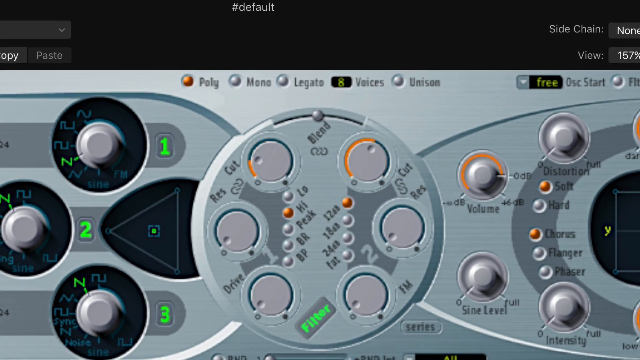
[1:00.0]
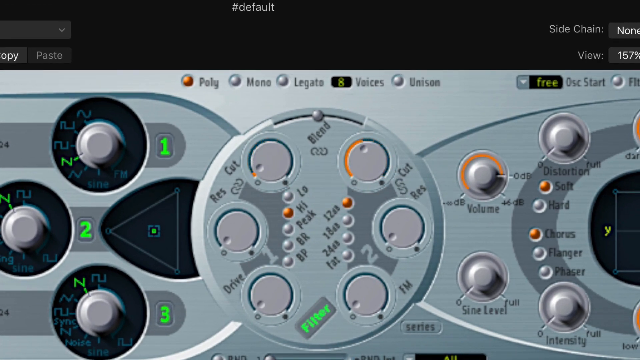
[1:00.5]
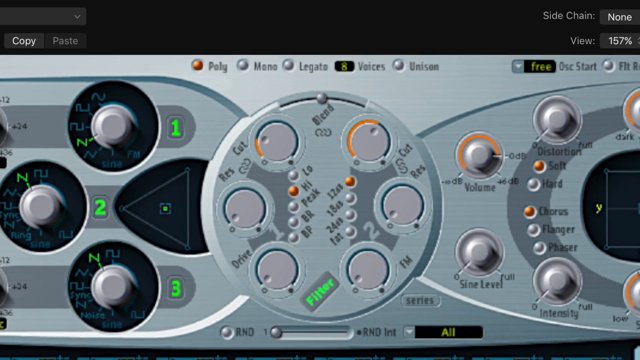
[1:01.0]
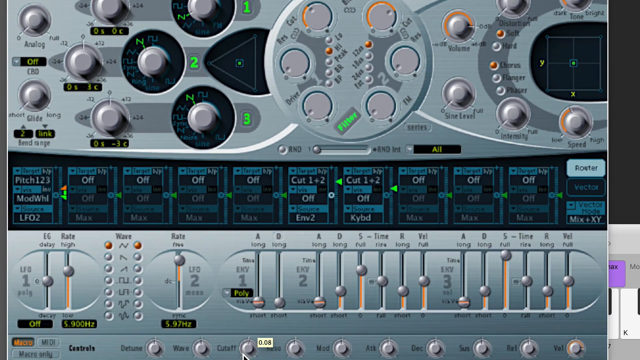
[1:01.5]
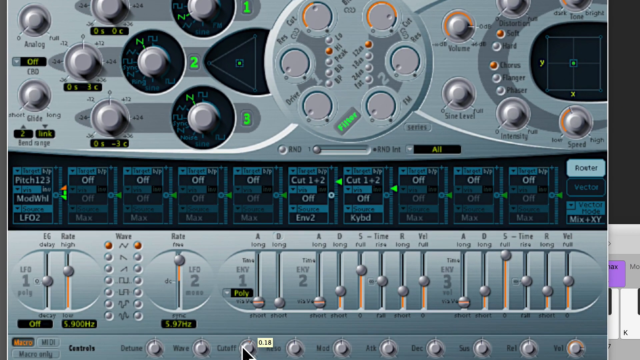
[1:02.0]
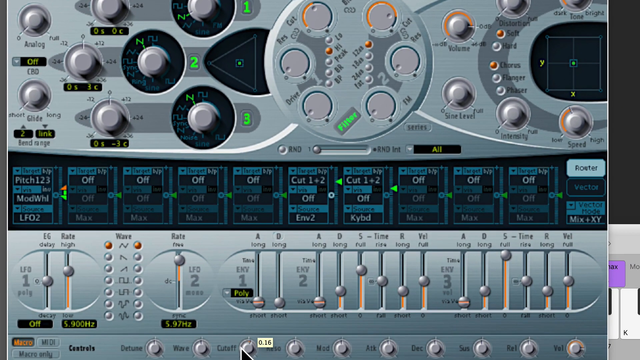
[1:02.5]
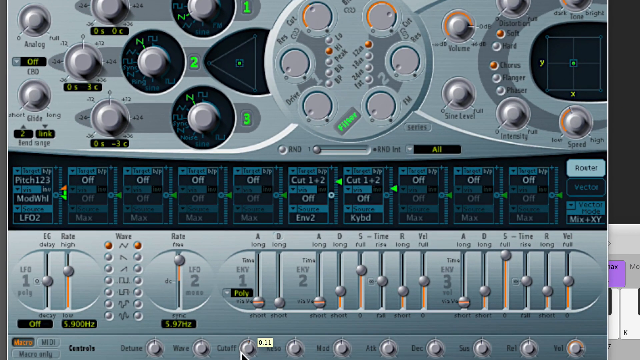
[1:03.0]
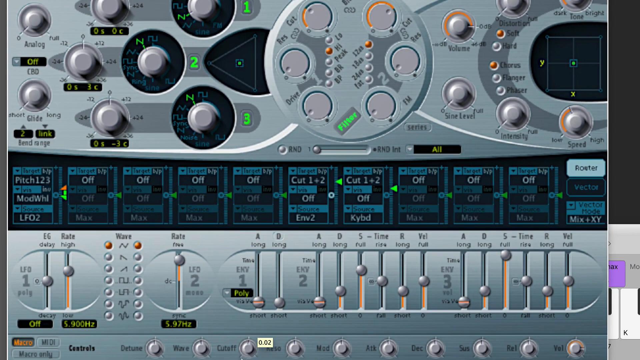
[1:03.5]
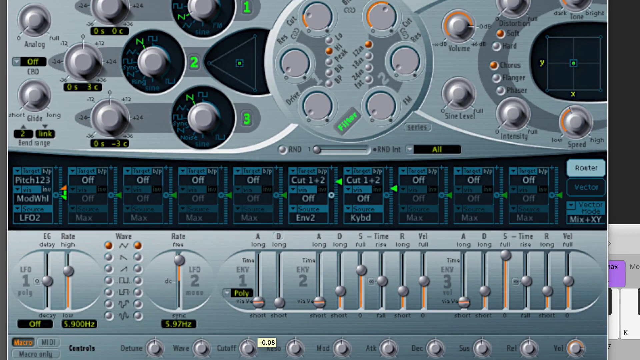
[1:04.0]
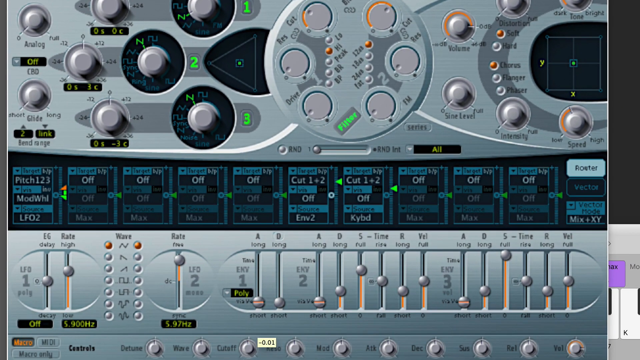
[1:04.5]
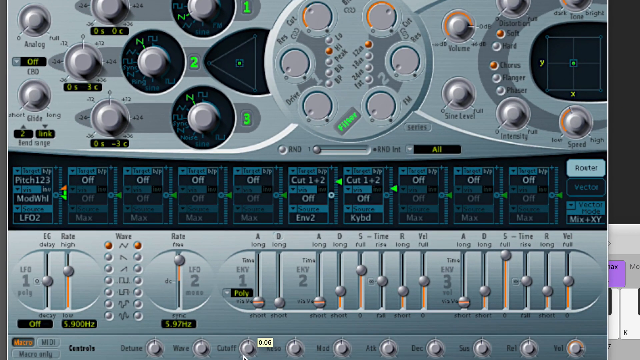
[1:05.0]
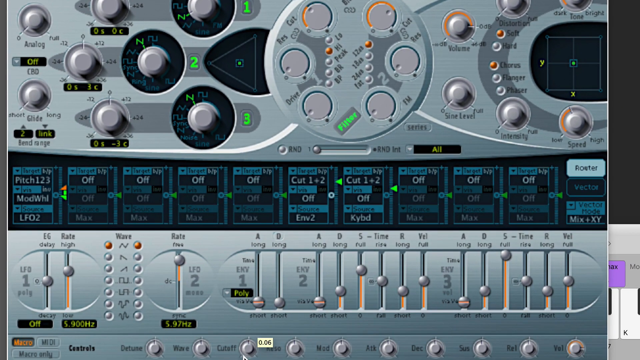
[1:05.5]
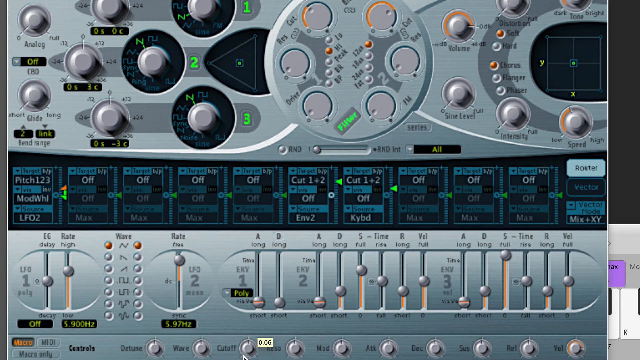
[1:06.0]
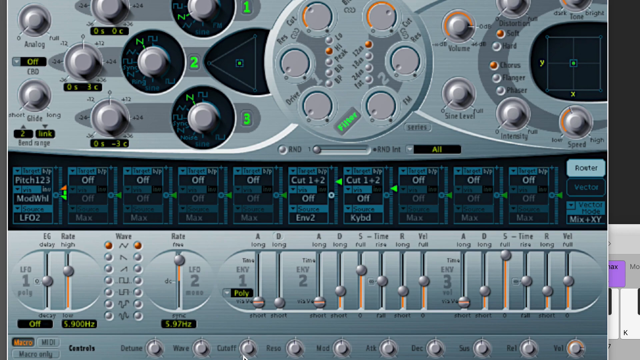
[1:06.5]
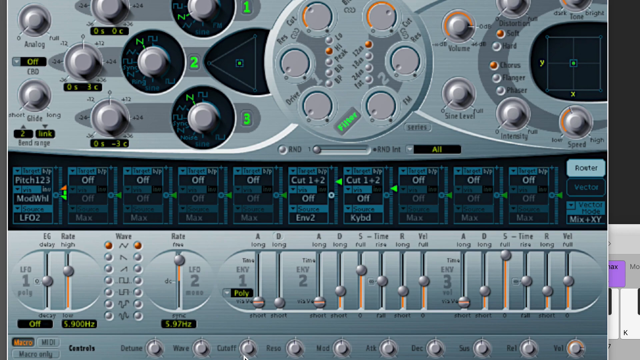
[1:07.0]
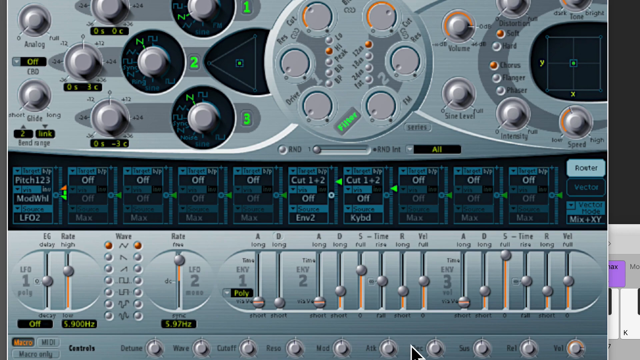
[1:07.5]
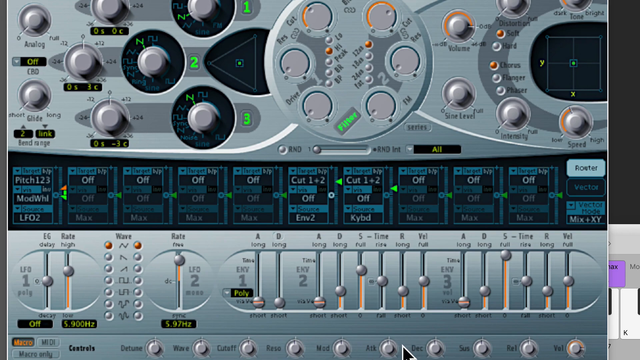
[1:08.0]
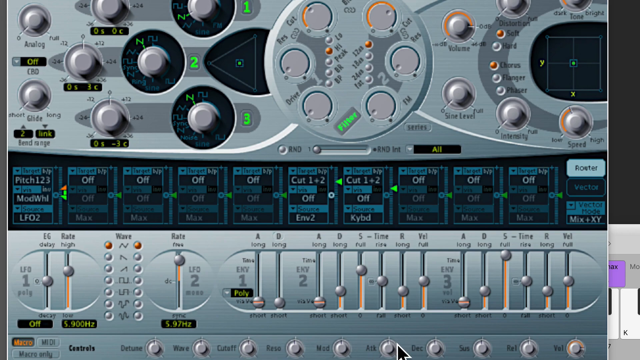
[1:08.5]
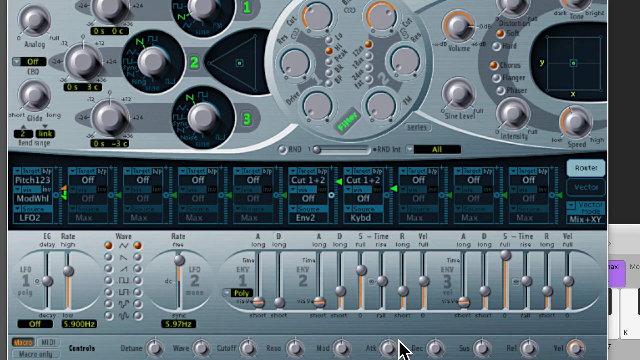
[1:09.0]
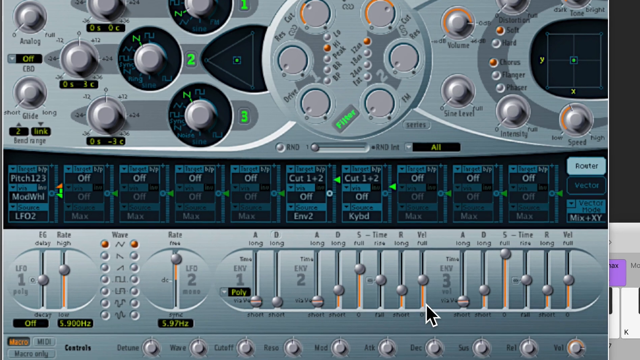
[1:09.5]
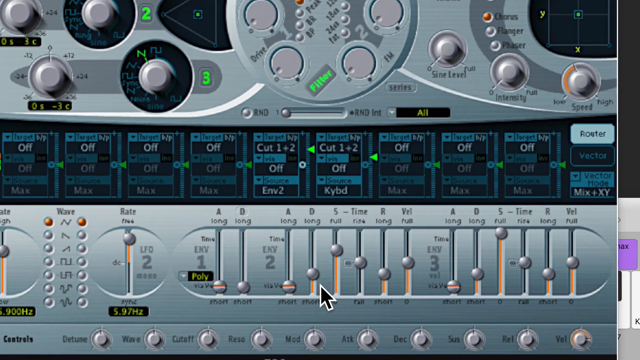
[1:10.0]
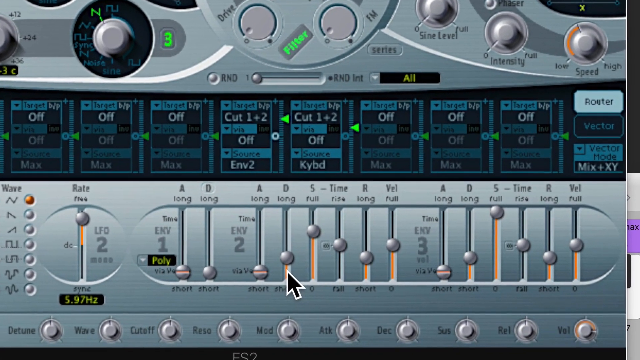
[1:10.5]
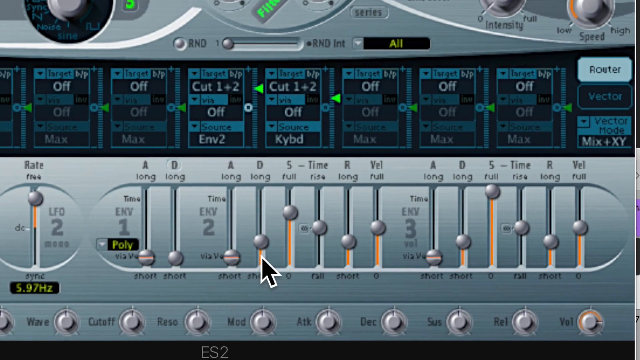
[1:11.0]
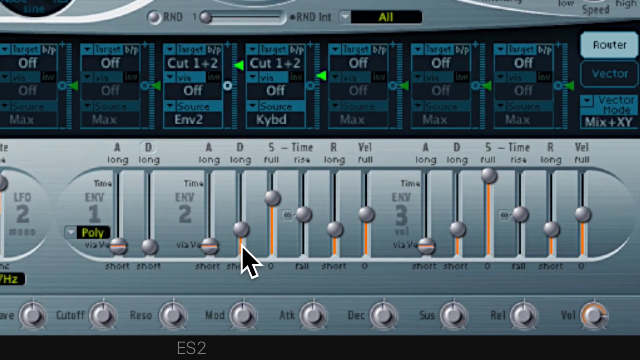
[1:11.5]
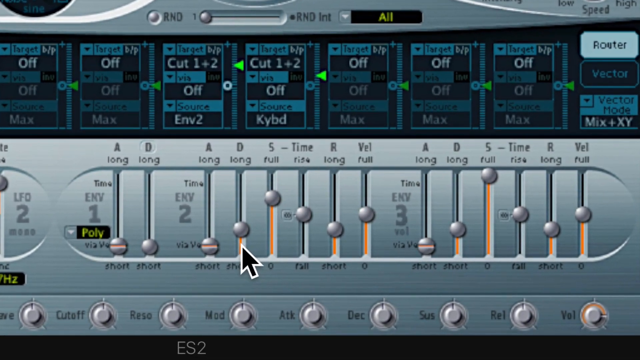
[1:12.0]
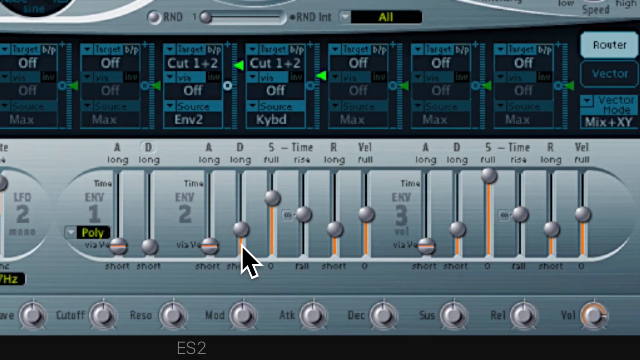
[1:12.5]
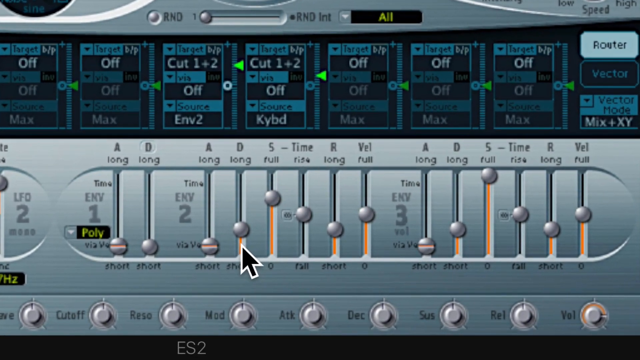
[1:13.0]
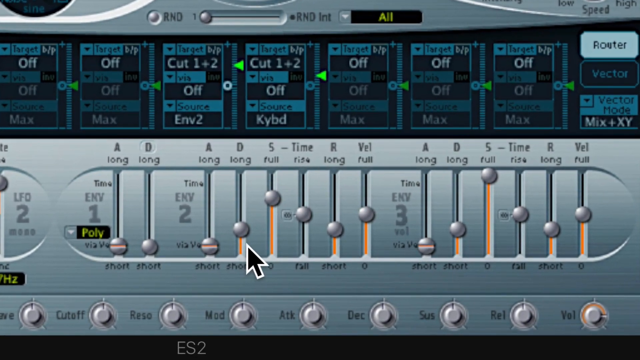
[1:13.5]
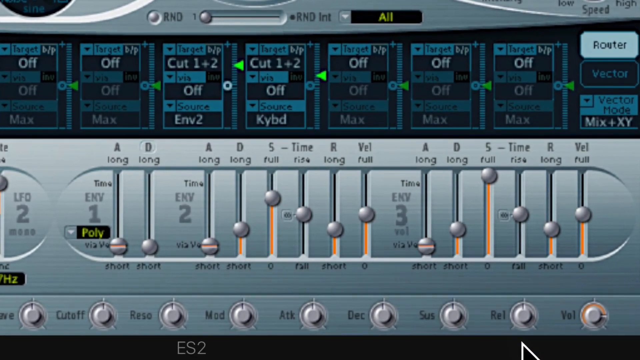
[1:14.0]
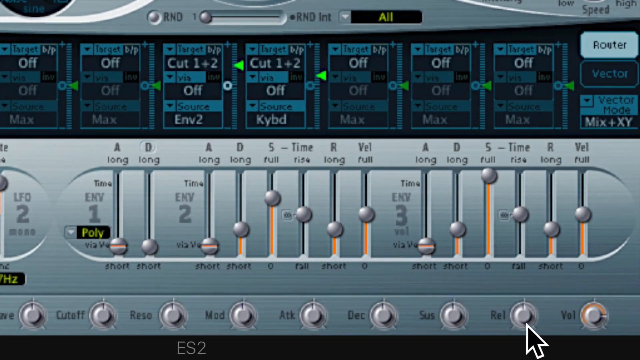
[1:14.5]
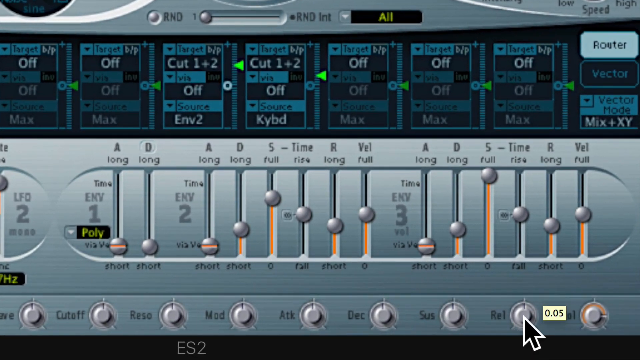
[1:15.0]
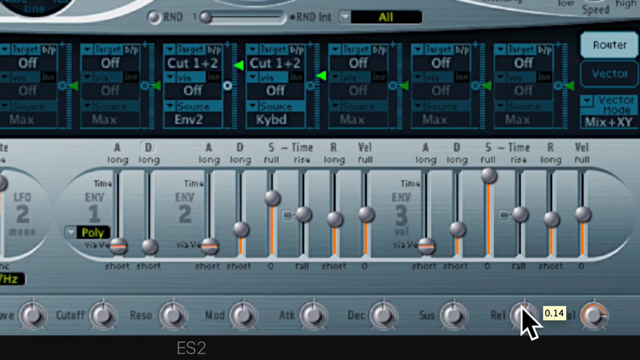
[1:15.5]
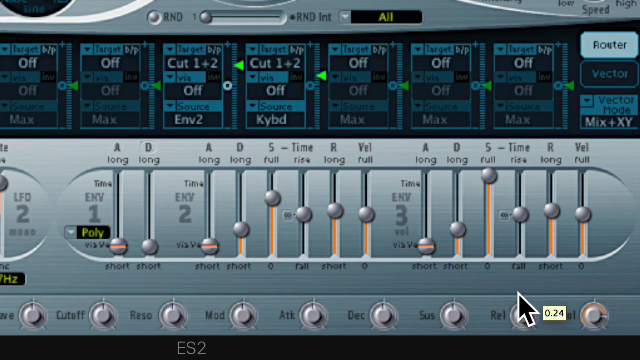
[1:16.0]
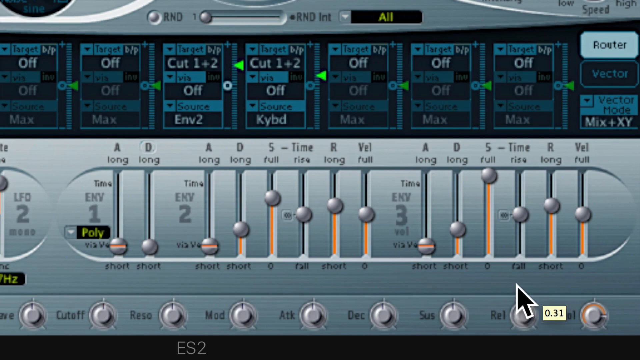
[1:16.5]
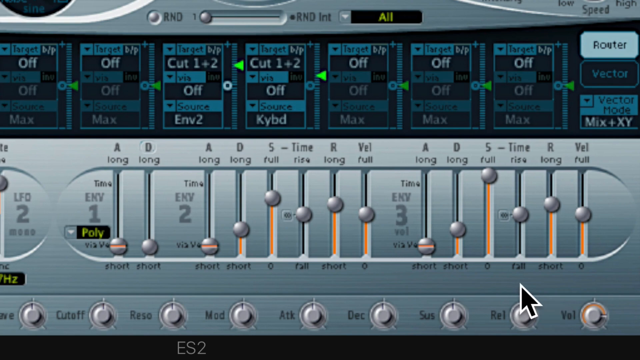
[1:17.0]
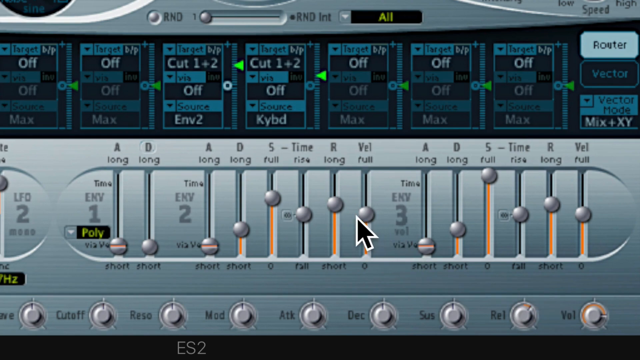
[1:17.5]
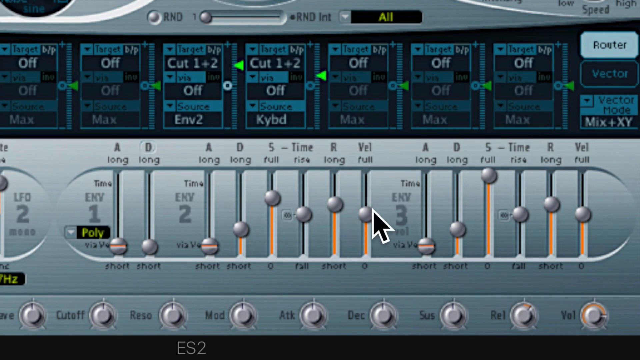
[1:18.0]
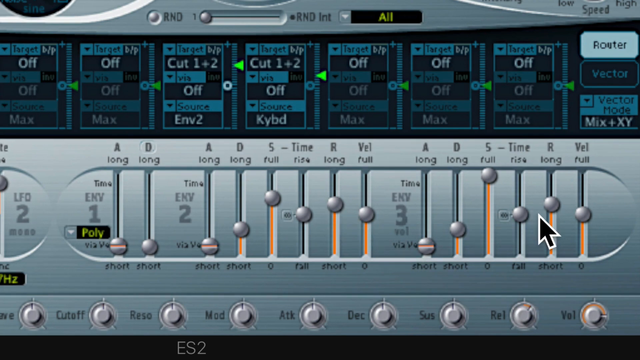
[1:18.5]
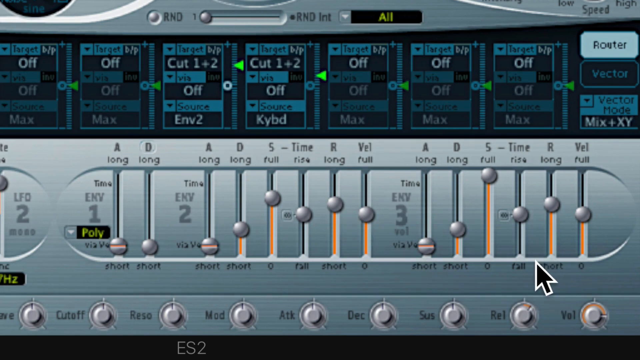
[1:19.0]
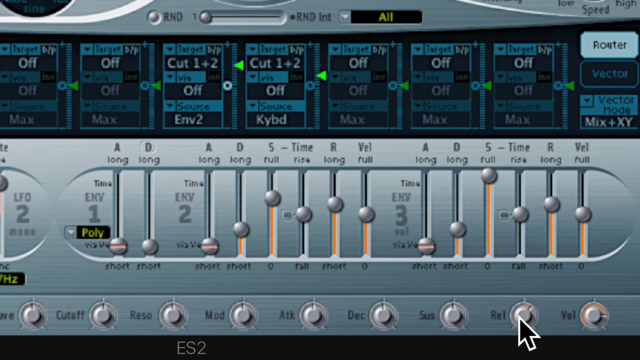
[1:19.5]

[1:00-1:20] Once again the audio knobs in the center of the interface are adjusted left and right individually. These knobs seem to represent the filter, and the selected options below the knobs, one on either side, are "high" and "12". The user continues adjusting the option at the bottom of the screen, seemingly tuning the filter. A different equalizer setting is then highlighted and zoomed in on; it appears to be the "NV" volume setting, where the cursor moves over the short and long spectrum of the D key for the virtual piano. The user adjusts an option in the bottom right that reads "REL" to 0.31, and volume sliders adjust accordingly as the REL knob changes. The user watches the values of the keys change as the REL knob's value changes.